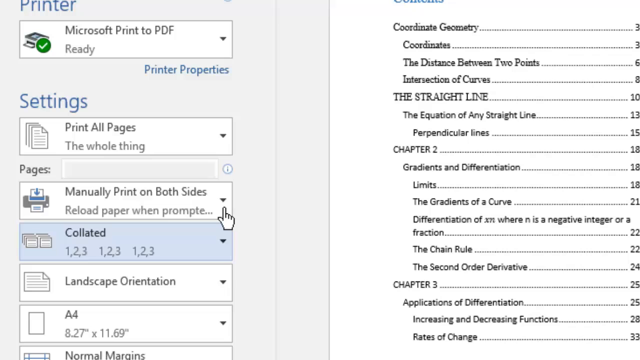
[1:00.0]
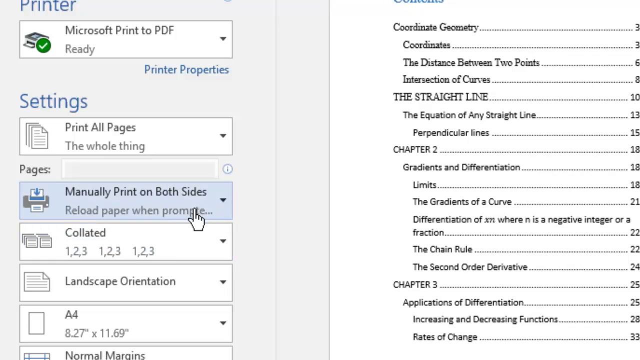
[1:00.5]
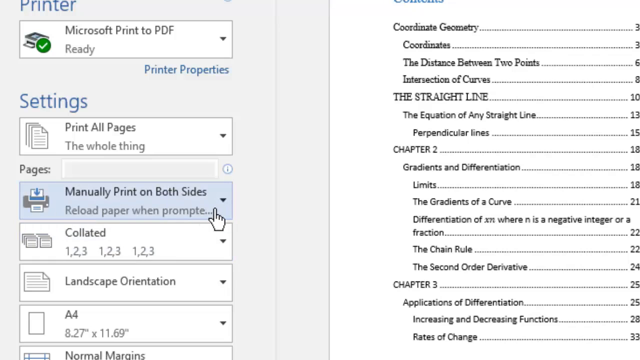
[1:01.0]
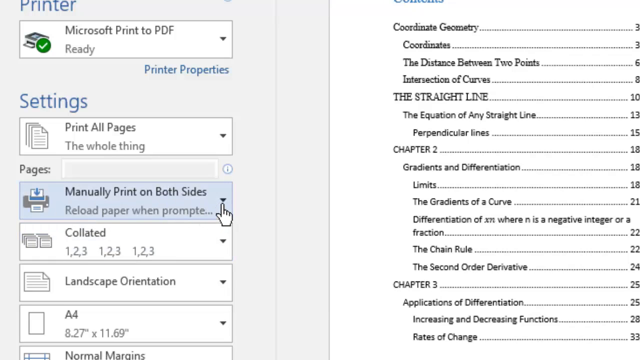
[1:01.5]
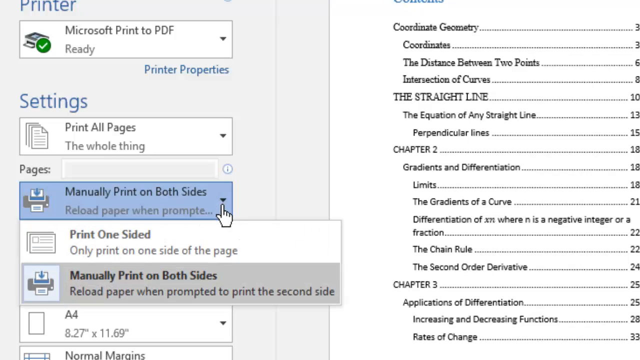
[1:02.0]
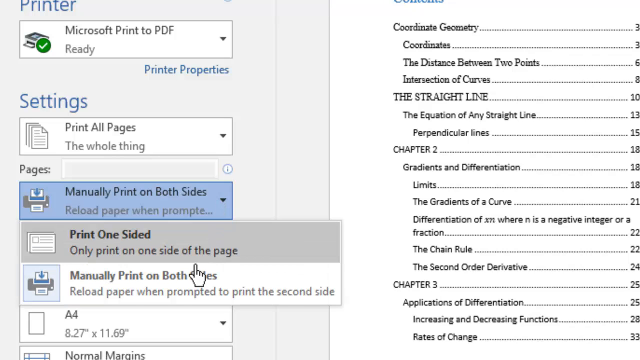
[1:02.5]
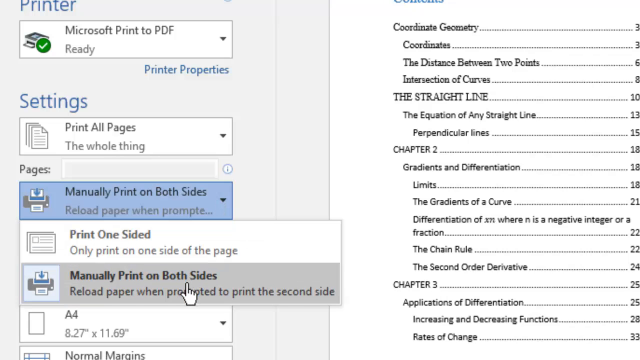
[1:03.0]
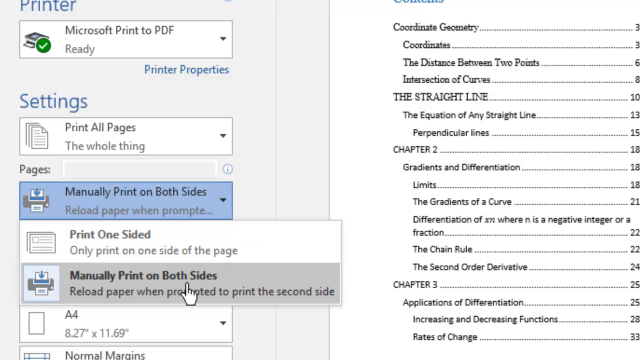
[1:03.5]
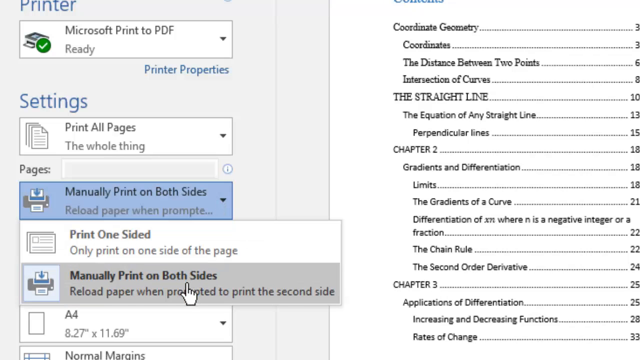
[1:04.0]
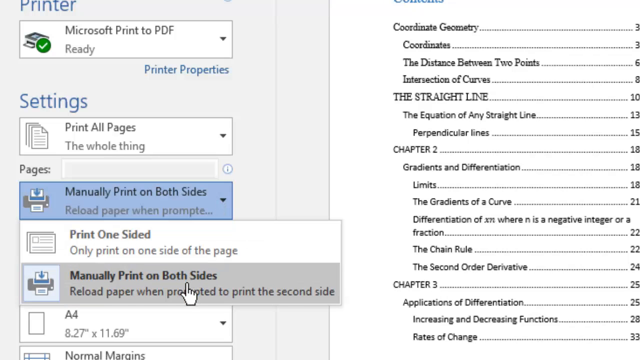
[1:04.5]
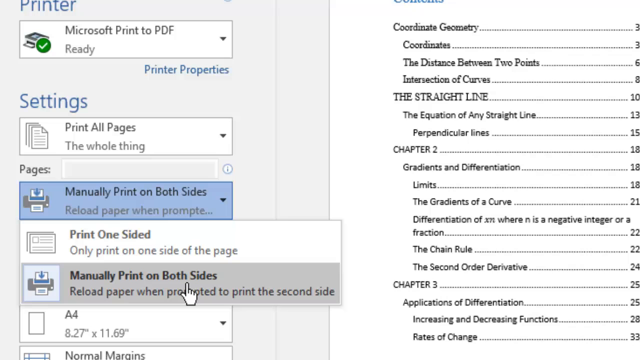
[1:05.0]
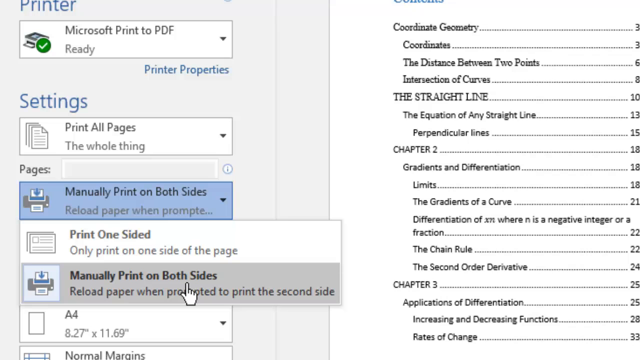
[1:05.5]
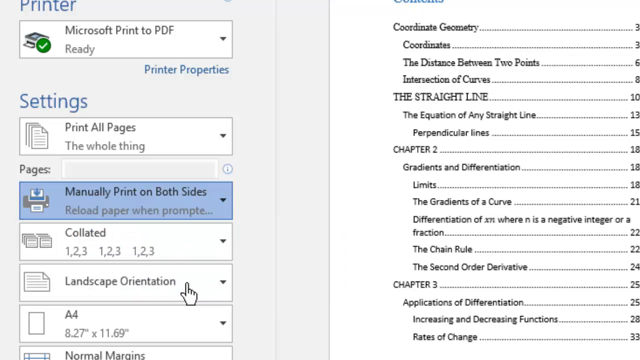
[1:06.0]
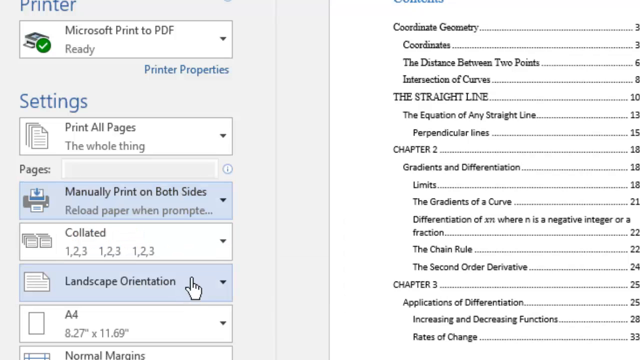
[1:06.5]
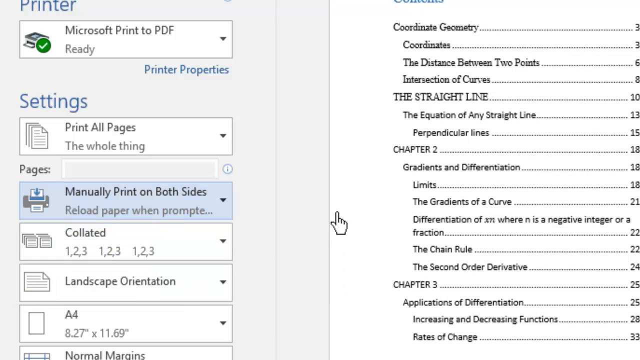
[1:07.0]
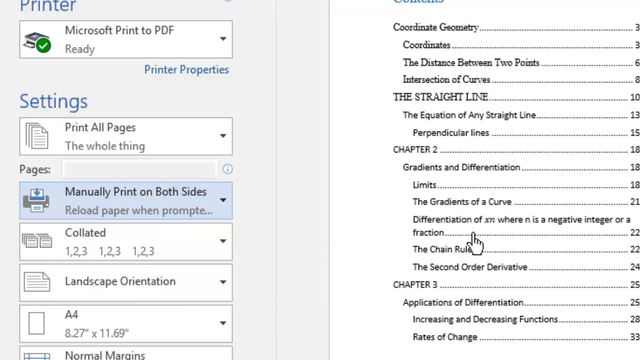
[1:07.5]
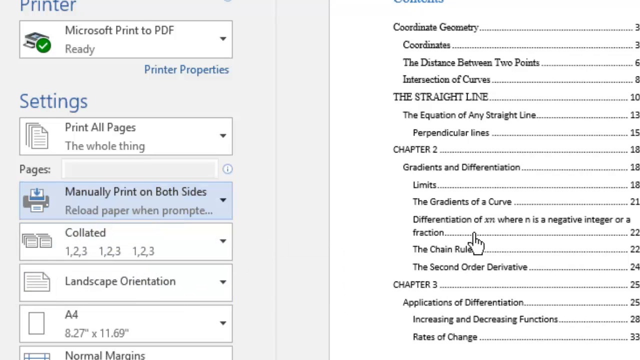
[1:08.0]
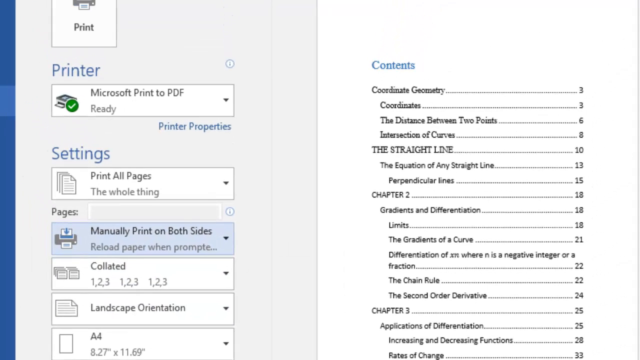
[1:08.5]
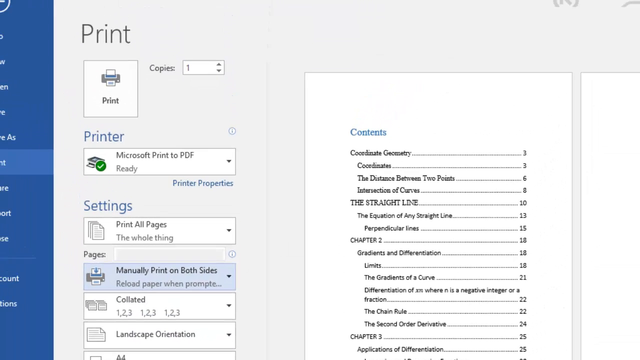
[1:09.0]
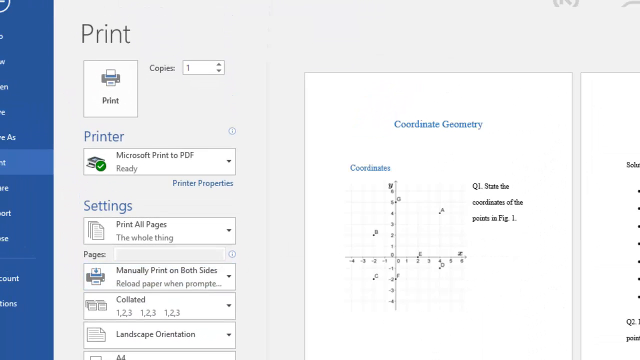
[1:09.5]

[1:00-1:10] Someone uses Microsoft Word with a cursor shaped like a human right hand with a pointing finger. The cursor is kind of jiggled on a drop-down menu under the printer settings, hovering over the pages drop-down. The cursor clicks the down arrow, scrolls down, and highlights the "manually print on both sides" selection. The mouse kind of hovers there for a little bit, then goes to the next drop-down menu below, which is collated.